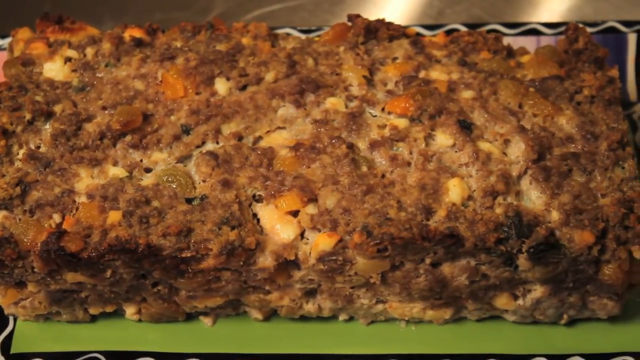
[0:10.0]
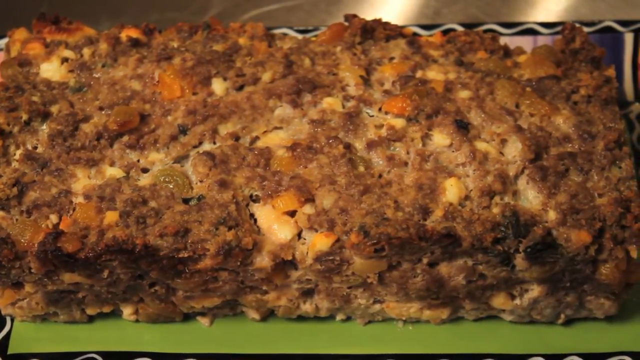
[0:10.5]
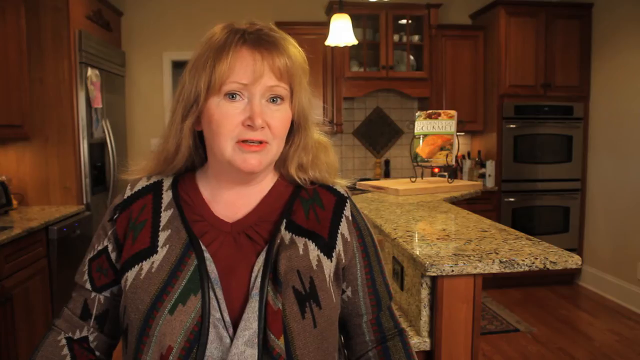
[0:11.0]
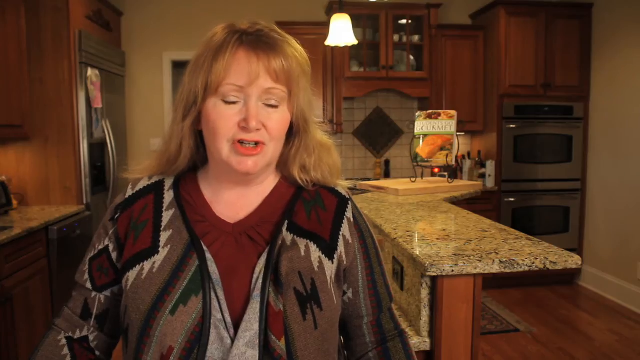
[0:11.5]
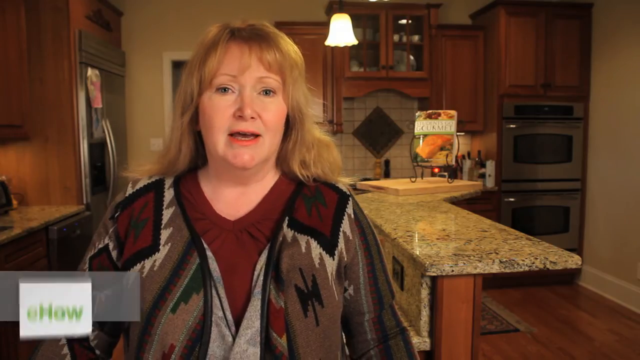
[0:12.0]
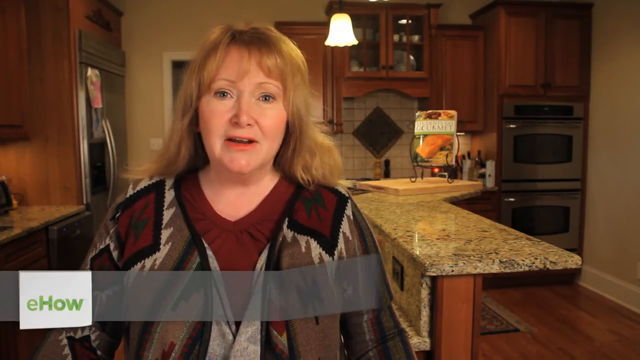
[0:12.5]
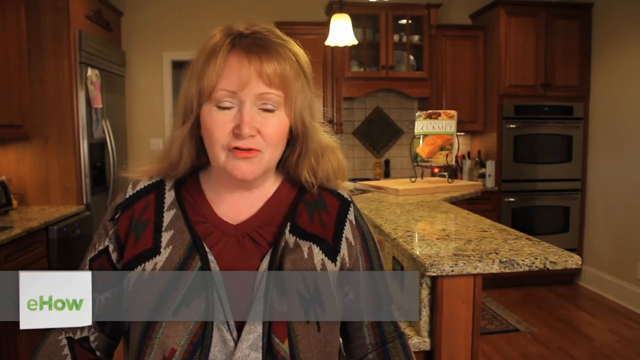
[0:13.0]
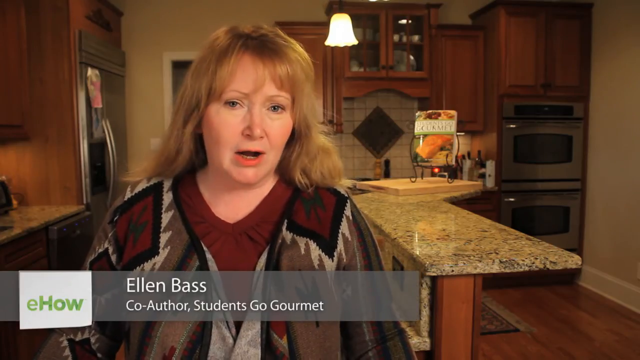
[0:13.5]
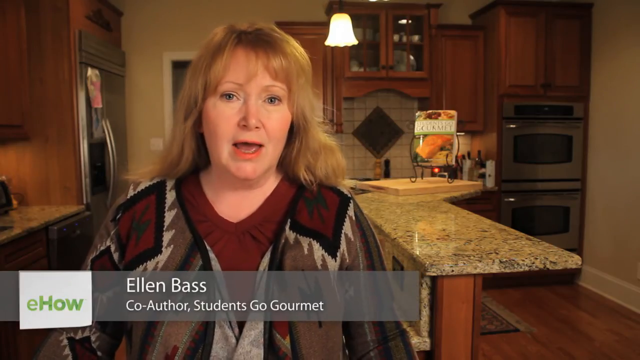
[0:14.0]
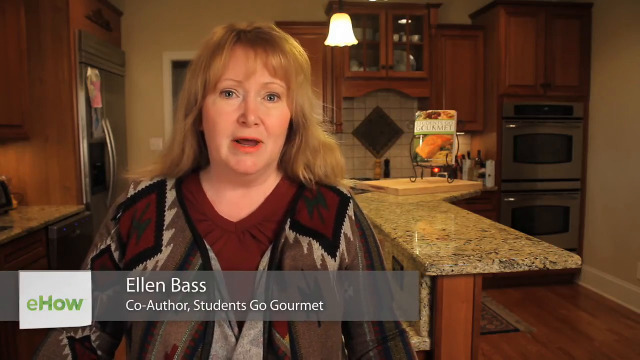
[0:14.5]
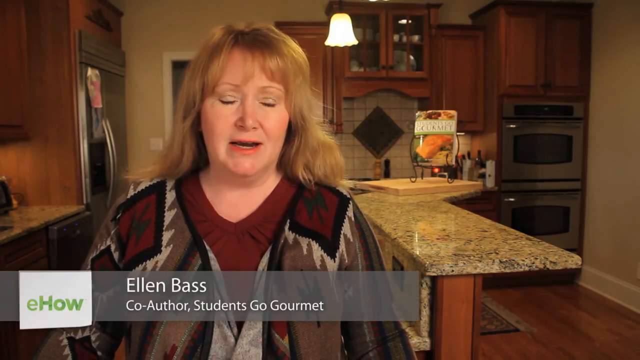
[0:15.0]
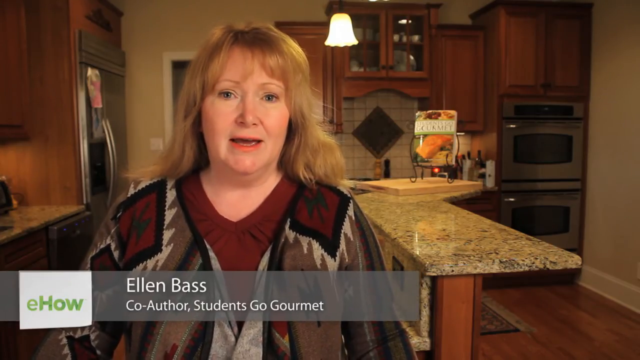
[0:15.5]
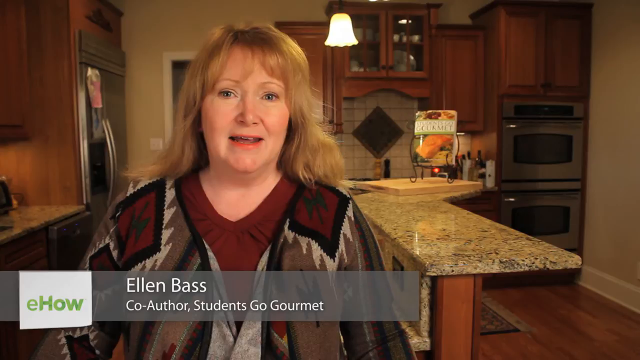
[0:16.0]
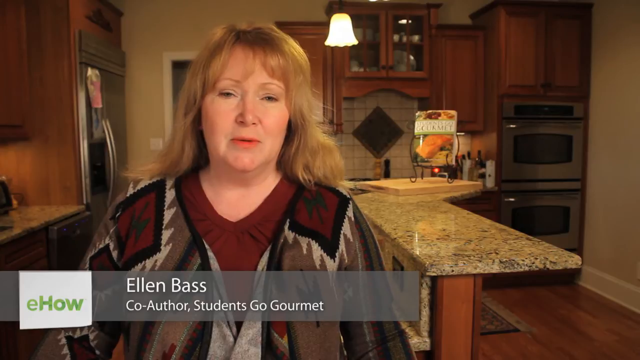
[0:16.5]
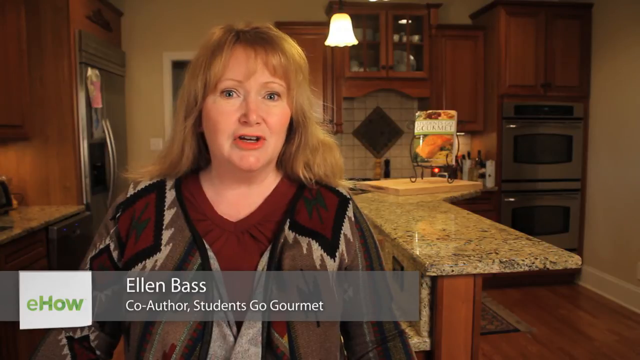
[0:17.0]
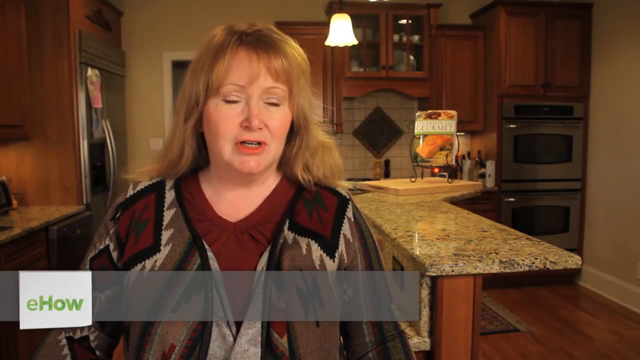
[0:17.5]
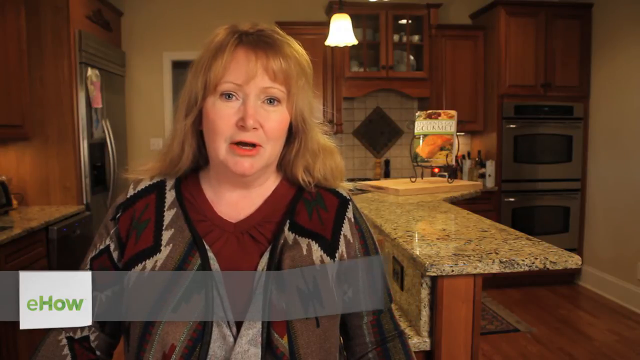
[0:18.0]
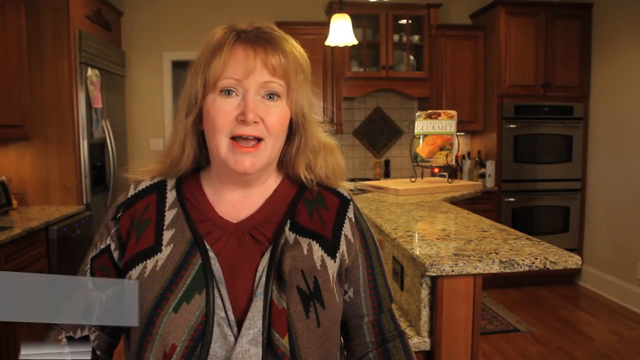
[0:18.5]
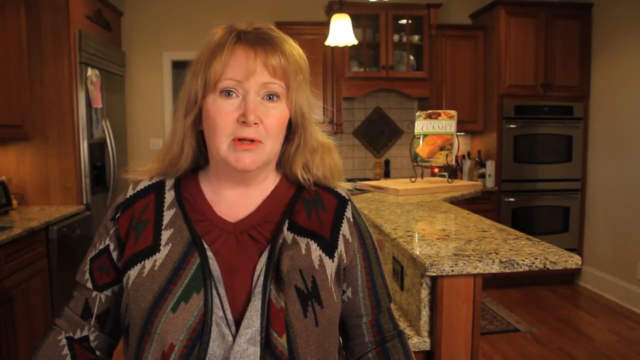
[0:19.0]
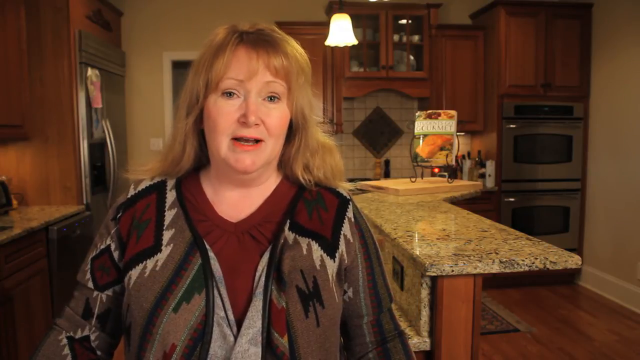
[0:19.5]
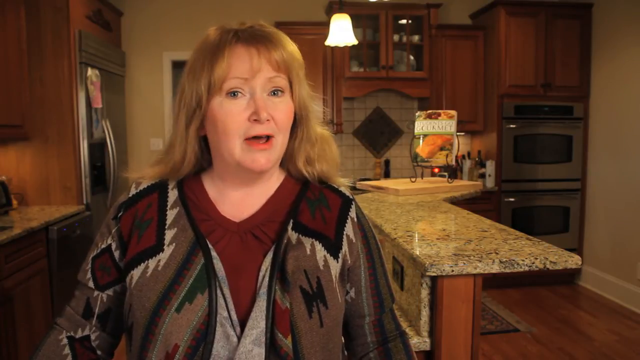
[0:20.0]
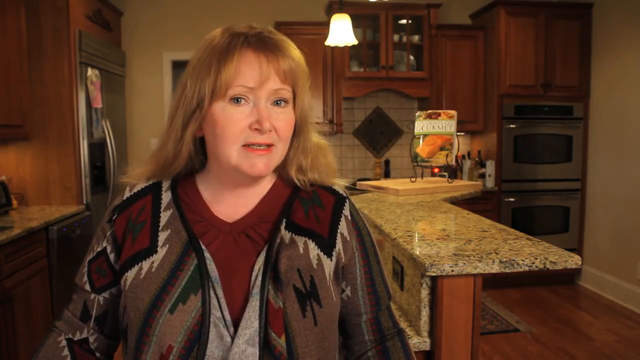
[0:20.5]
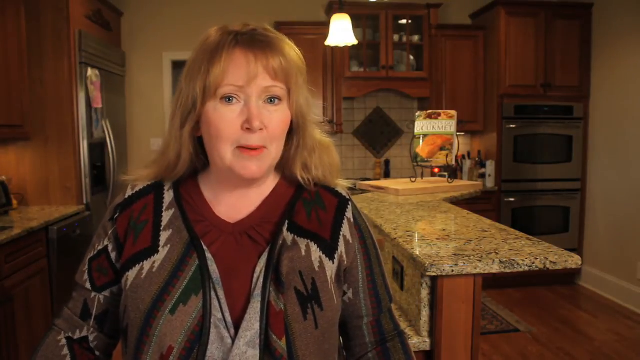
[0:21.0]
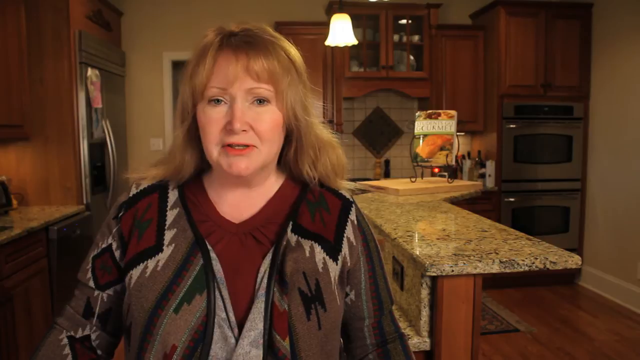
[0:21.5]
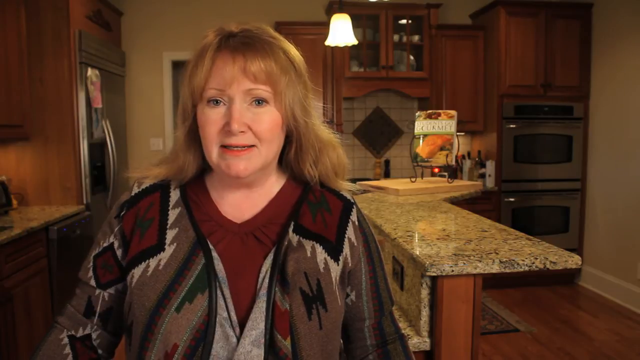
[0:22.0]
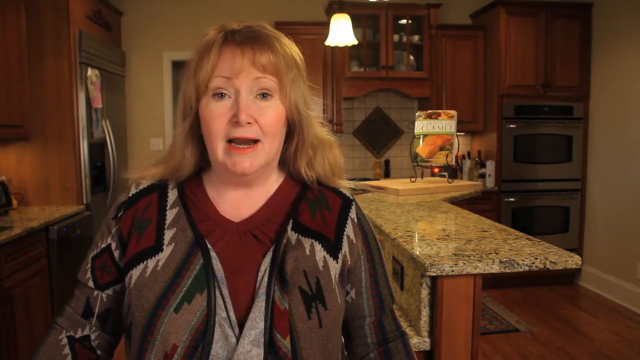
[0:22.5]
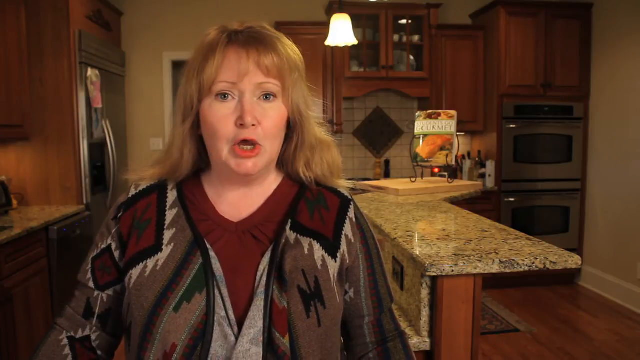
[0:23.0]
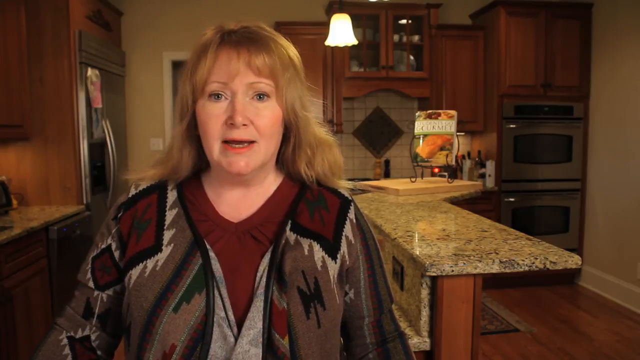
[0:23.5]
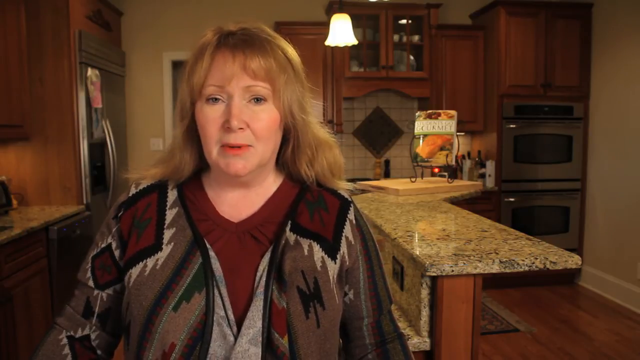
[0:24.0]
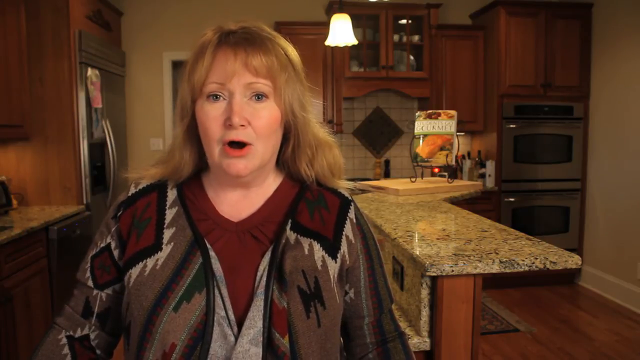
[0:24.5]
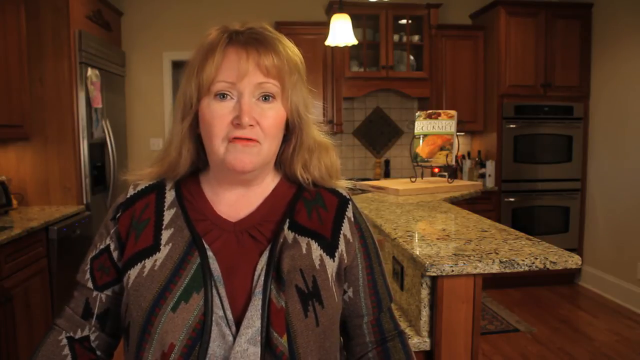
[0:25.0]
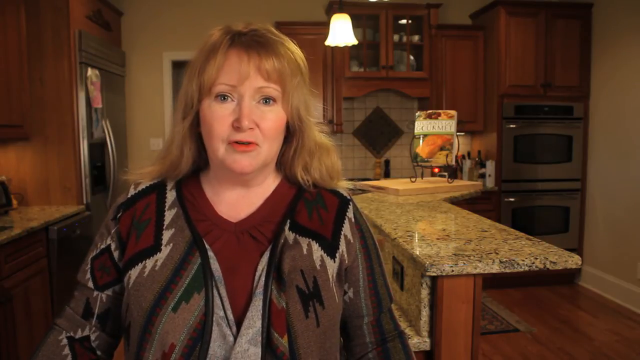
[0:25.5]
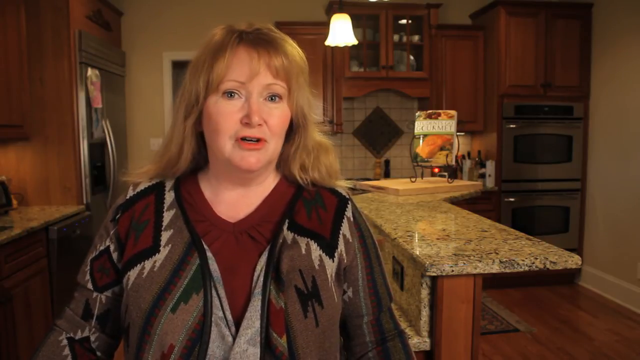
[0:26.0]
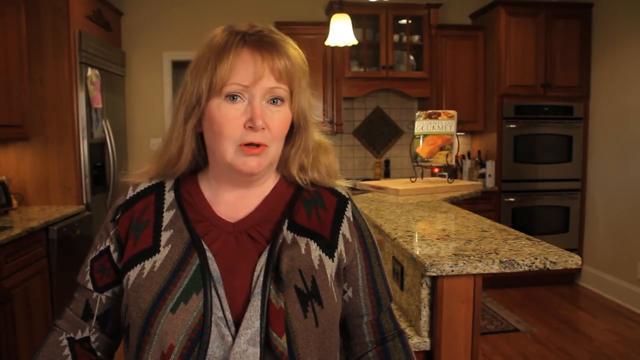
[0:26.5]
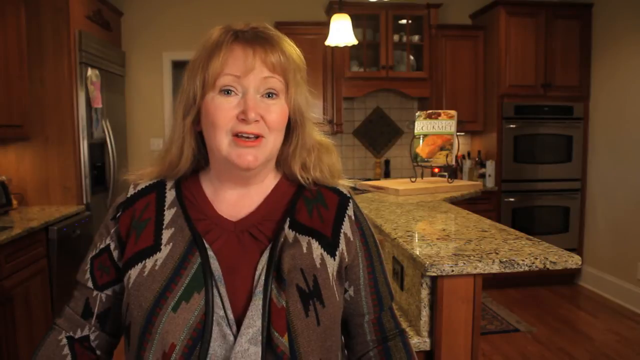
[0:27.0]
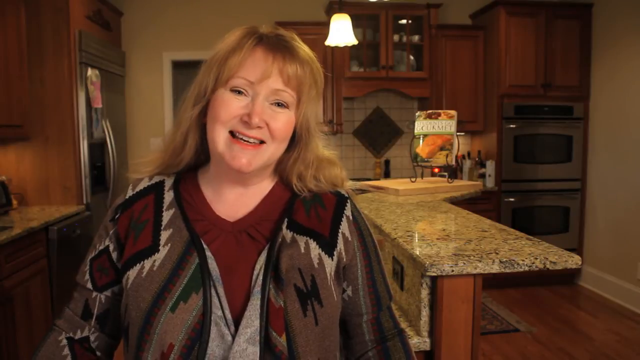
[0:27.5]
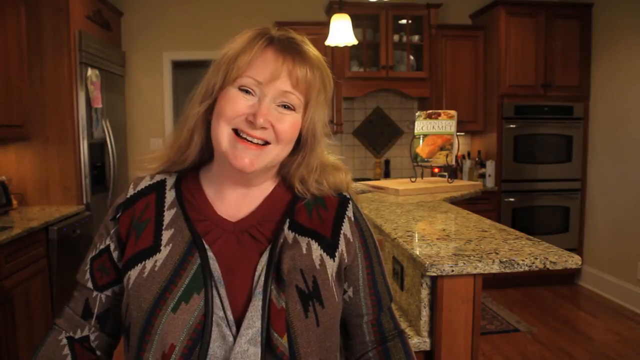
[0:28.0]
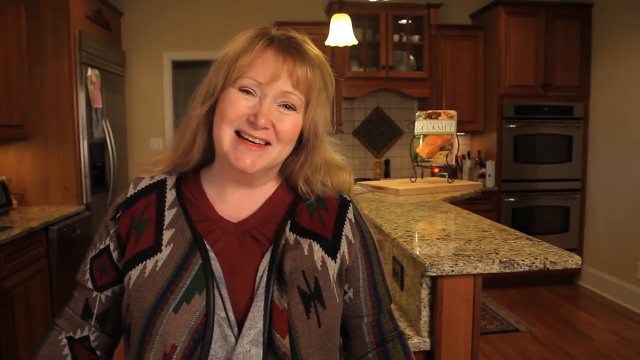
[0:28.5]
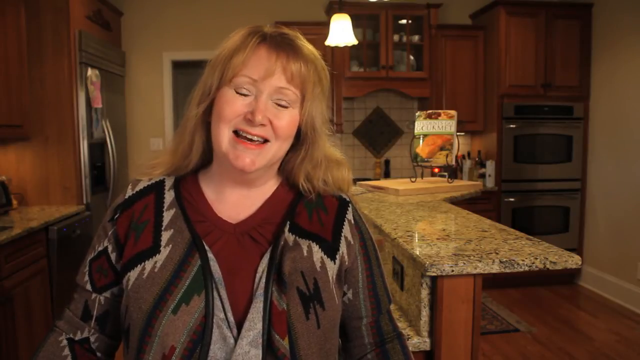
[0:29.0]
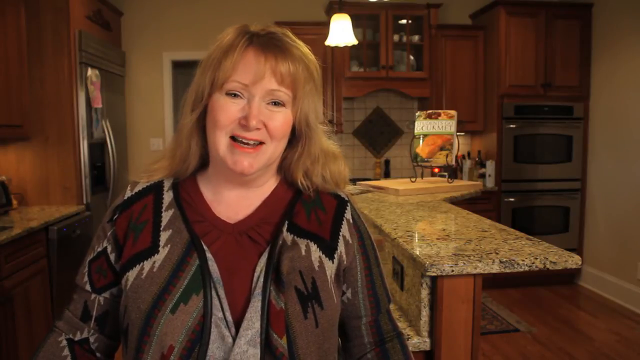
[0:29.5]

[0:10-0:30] The apparent modified lasagna is on screen, then the video cuts to a woman in her kitchen. She has shoulder-length blonde hair, wears a brown and red dress and red lipstick, and looks at the camera. Behind her in the kitchen, a marble-style island is on the right, and the fridge and dishwasher are on the viewer's left. The cabinets are behind her, with cabinets and the oven off to the right as well. An eHow text box at the bottom says "this is Ellen Bass, co-author of Students Go Gourmet". She talks to the camera, and at the end she kind of tilts her head to the left and smiles at the camera.